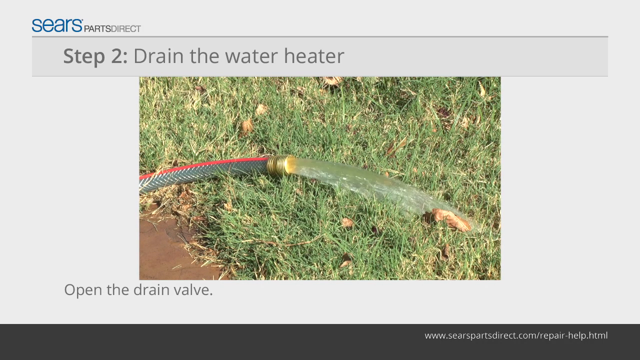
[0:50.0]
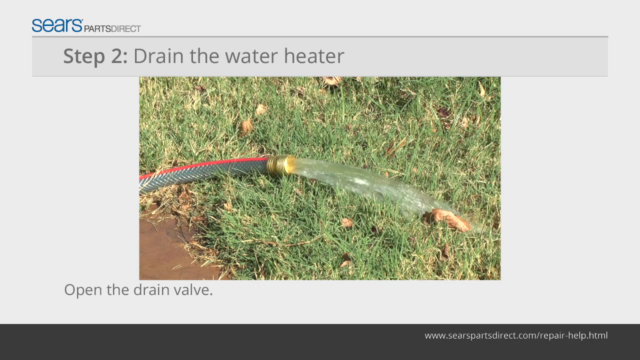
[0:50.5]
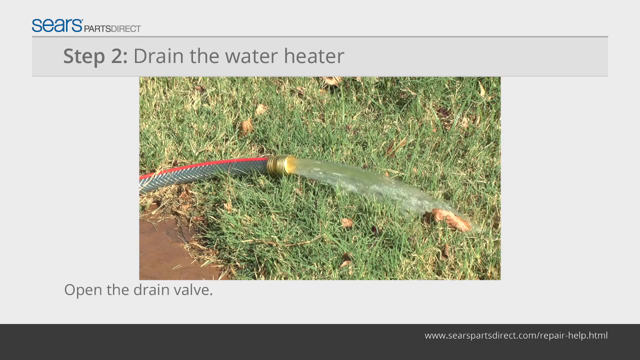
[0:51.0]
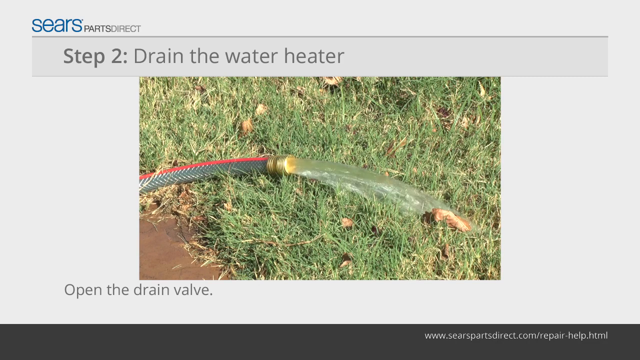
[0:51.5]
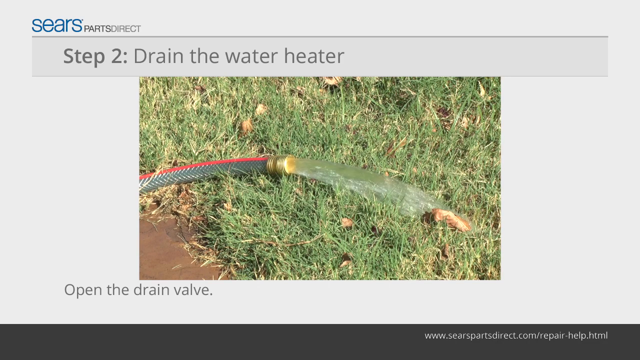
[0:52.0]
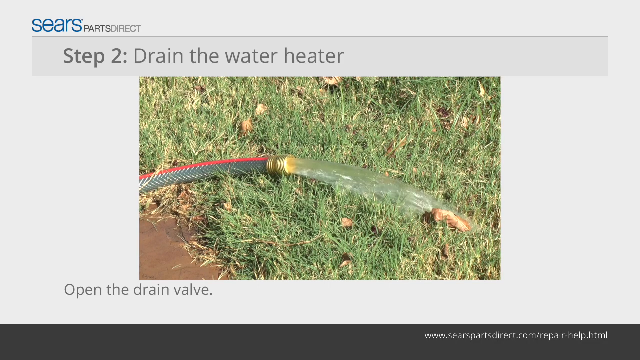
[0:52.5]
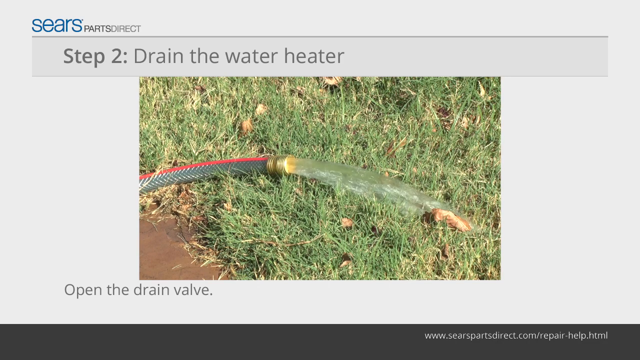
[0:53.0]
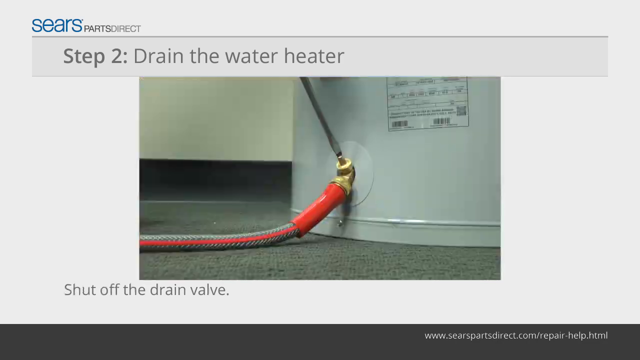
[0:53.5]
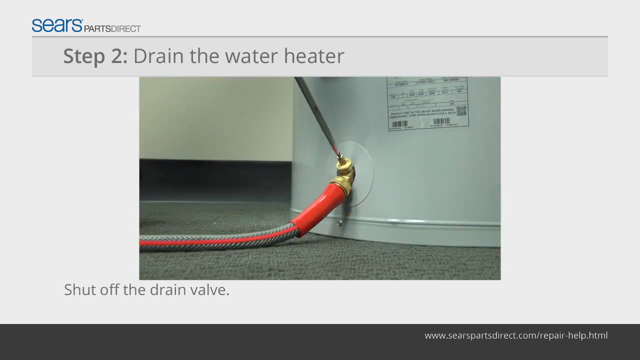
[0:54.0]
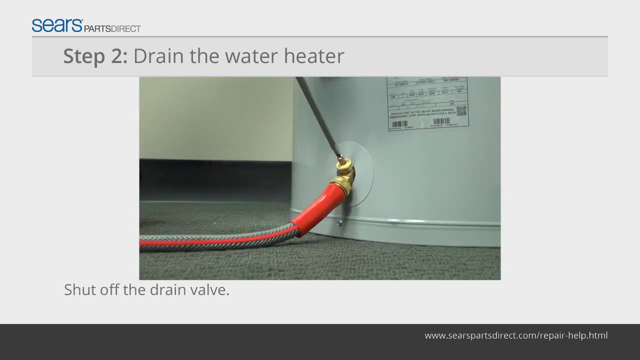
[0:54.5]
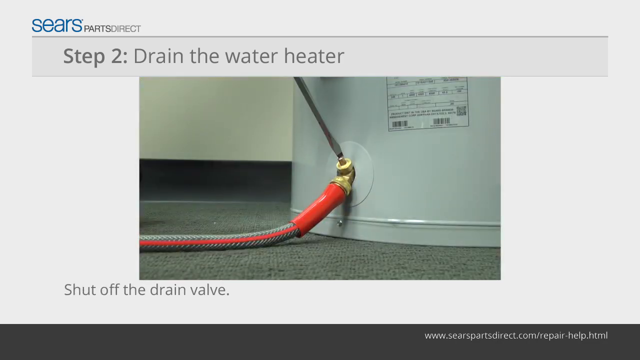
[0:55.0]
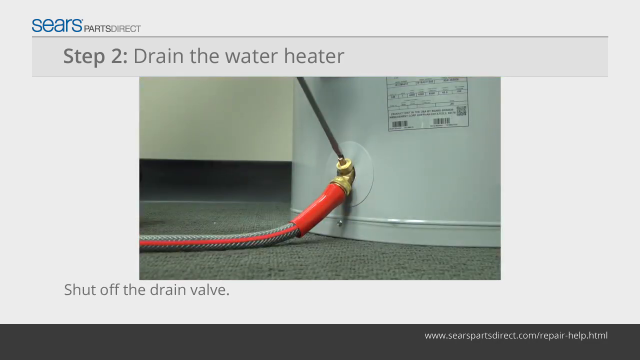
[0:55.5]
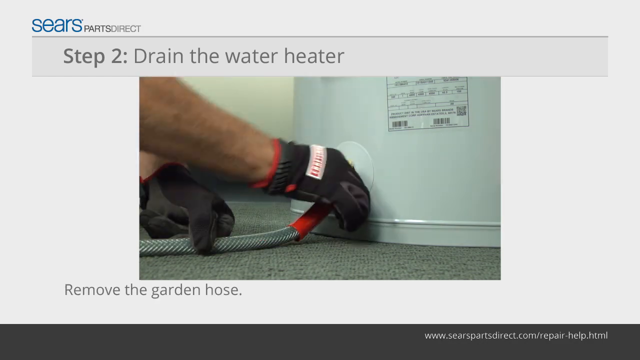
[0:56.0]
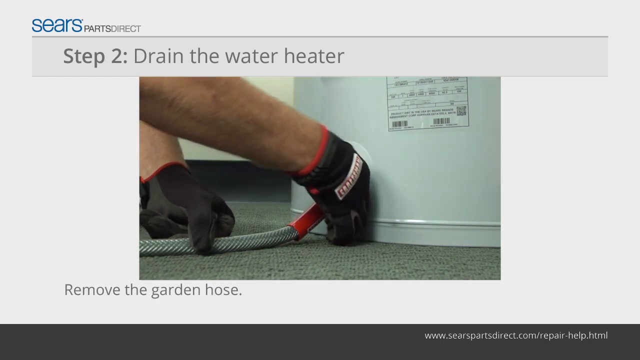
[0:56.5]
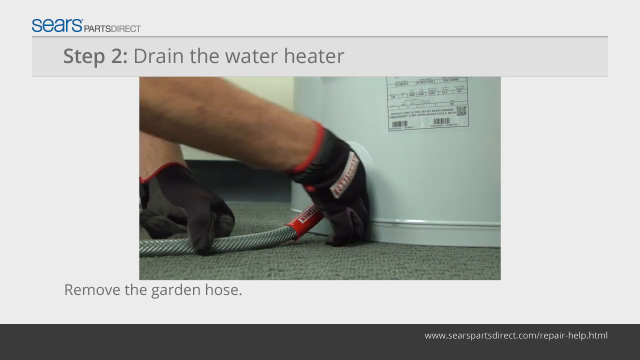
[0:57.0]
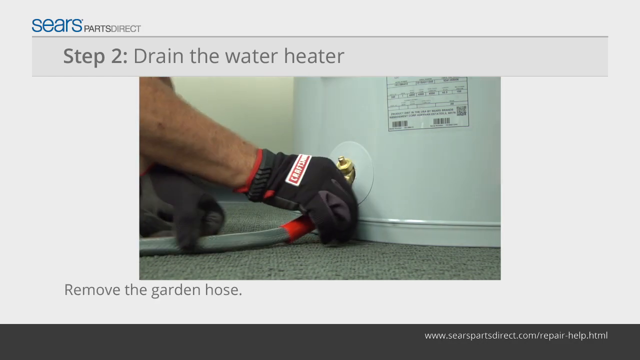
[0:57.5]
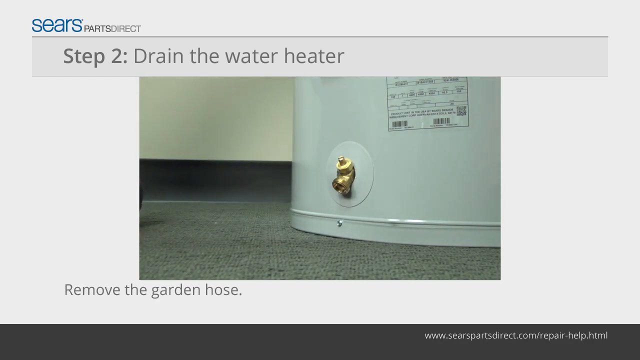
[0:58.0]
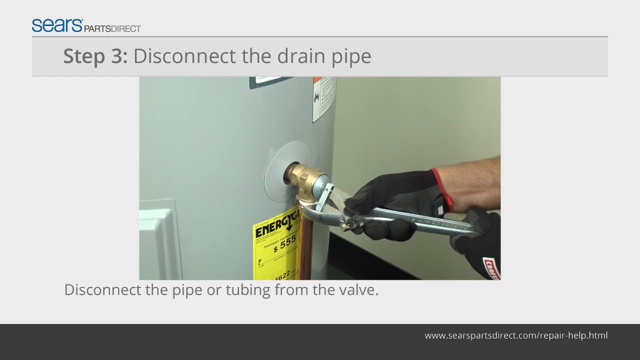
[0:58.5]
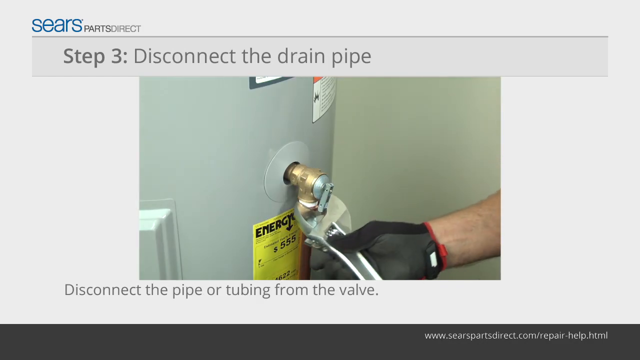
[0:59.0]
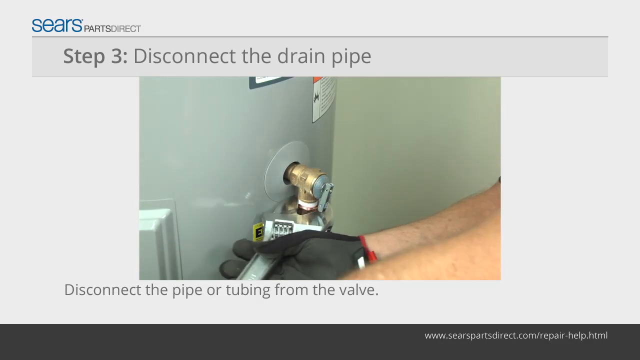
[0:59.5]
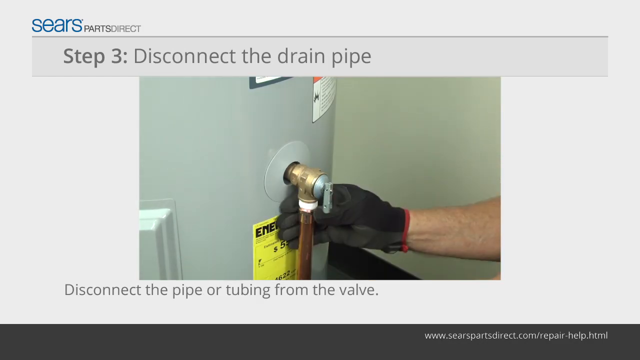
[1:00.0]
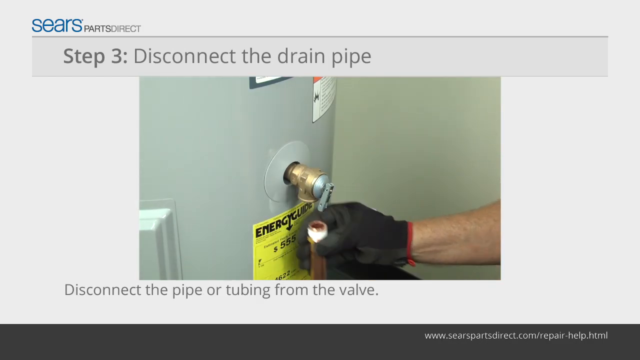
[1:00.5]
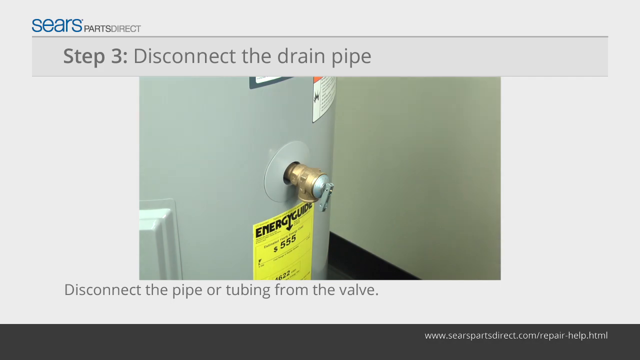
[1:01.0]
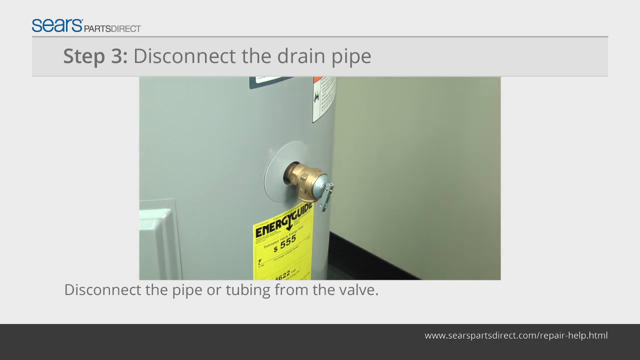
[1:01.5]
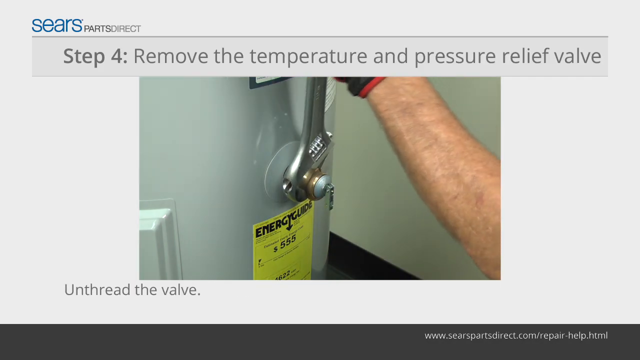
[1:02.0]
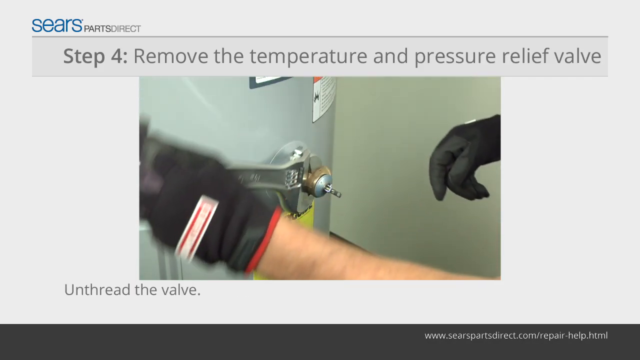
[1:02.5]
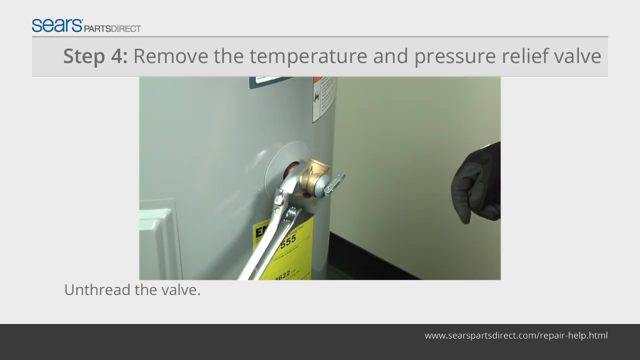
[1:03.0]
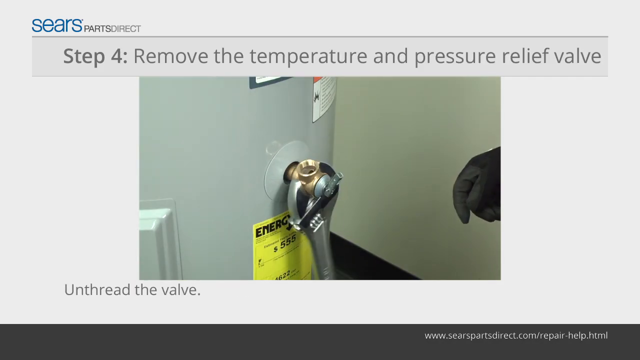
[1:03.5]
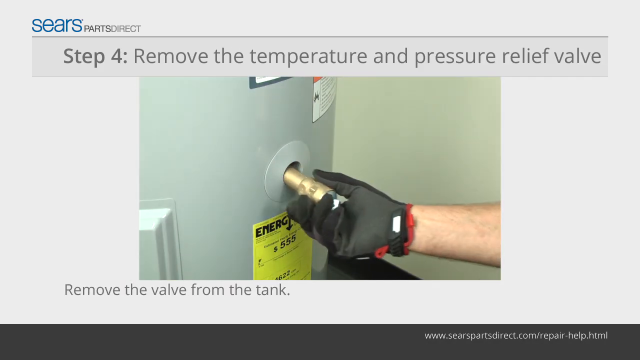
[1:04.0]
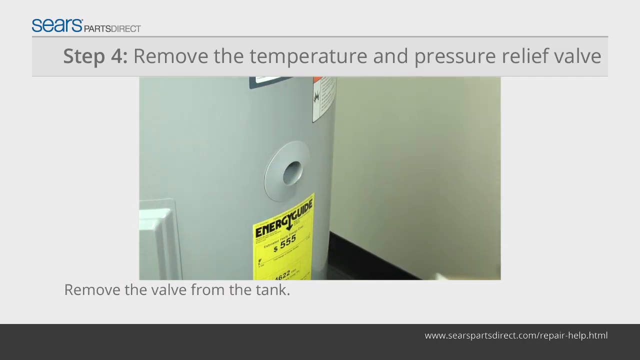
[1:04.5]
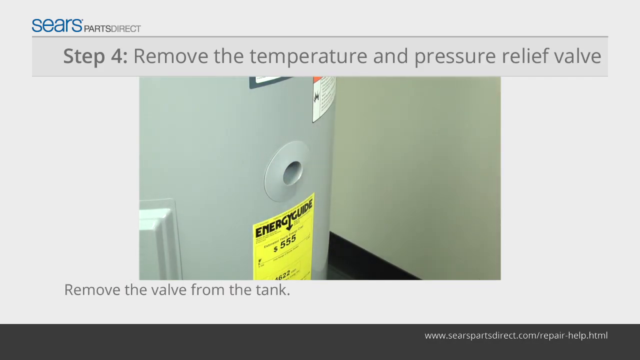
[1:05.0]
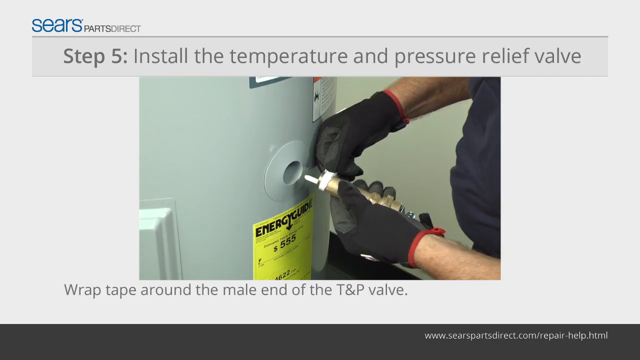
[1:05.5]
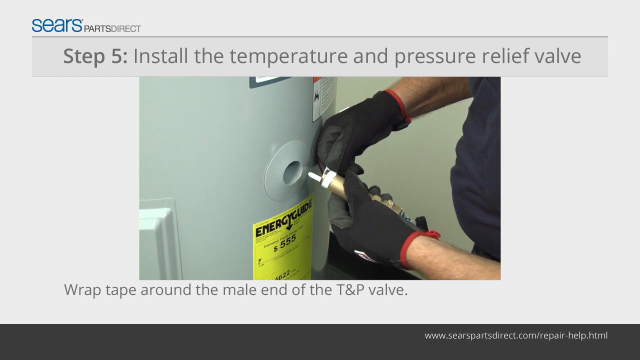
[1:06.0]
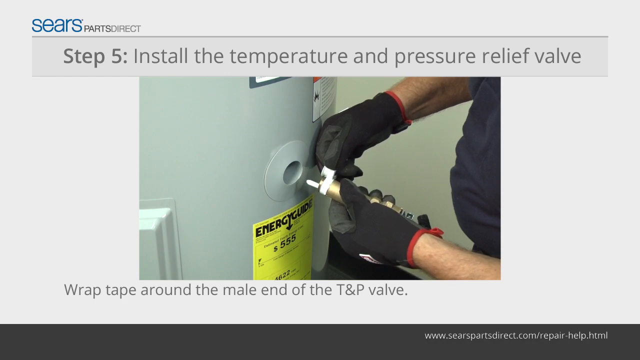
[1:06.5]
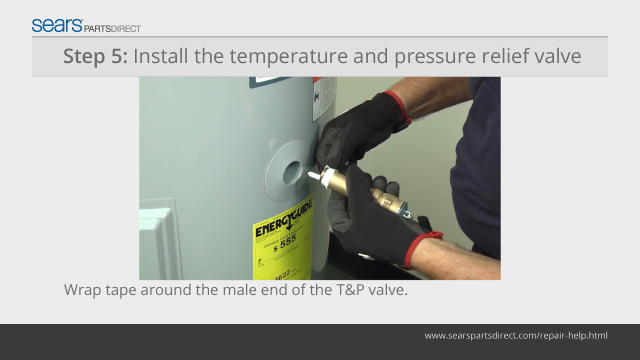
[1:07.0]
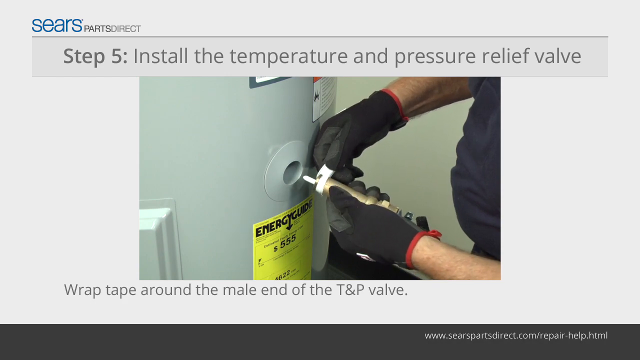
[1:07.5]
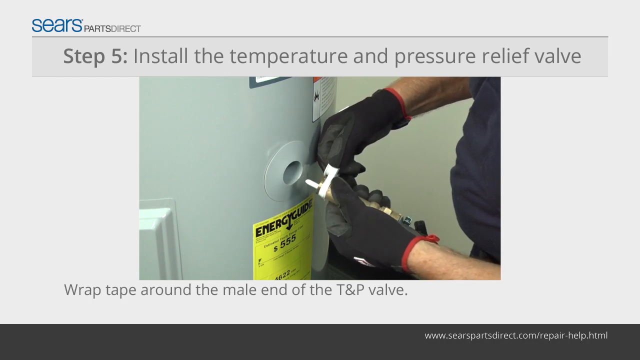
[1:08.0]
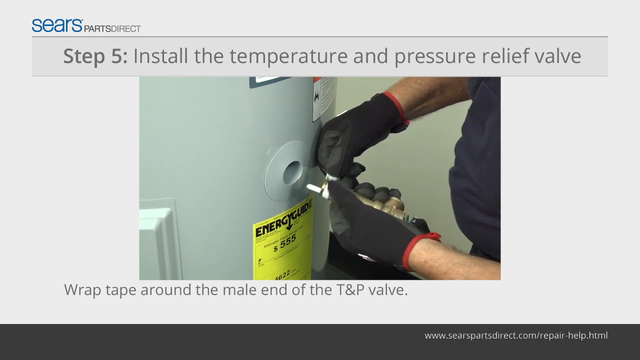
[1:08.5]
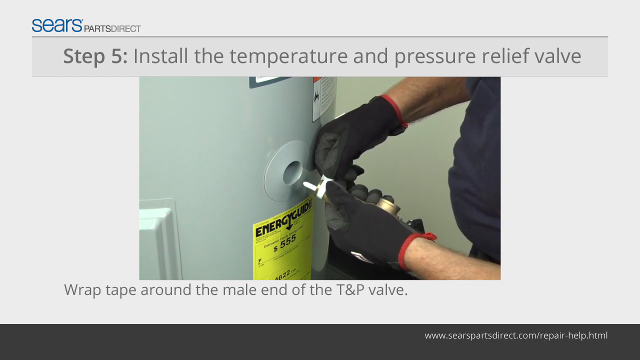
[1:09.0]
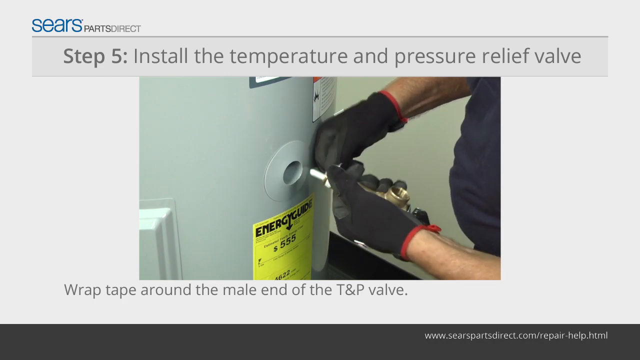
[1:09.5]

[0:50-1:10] Outside, the hose lies on the grass with water coming out of it. The scene then goes back inside to the bottom of the water heater, where the screwdriver is working on something; it is unclear whether it is being tightened or unscrewed. The screwdriver is then removed. A person wearing black gloves puts his hands on a nozzle at the end and appears to be unscrewing the hose, then removes the hose from the water heater. Further up the water heater, he unscrews another nozzle coming out of the water heater, which is kind of a gold color, and removes it. A wrench is then around that same area, and he turns it counterclockwise before removing the gold nozzle coming out of the water heater. He is then seen holding the same gold nozzle, with both hands visible in black gloves, and he appears to begin putting what may be a new gold nozzle onto the water heater.